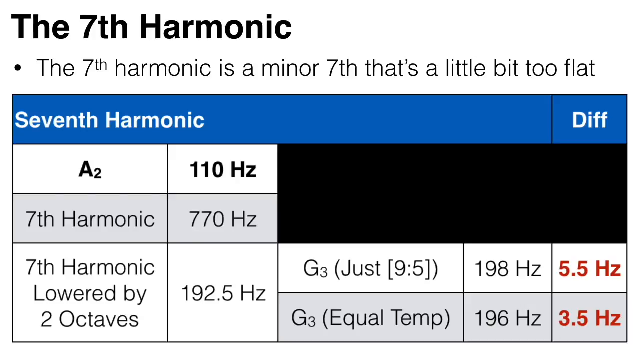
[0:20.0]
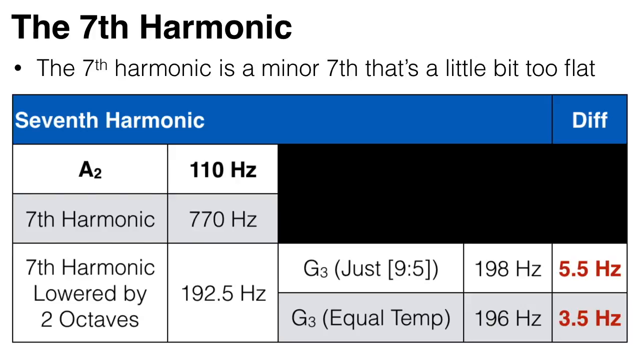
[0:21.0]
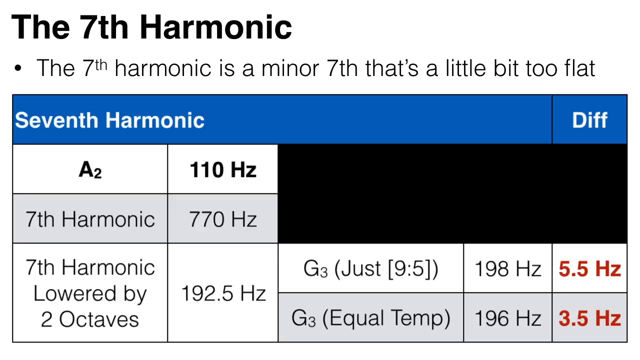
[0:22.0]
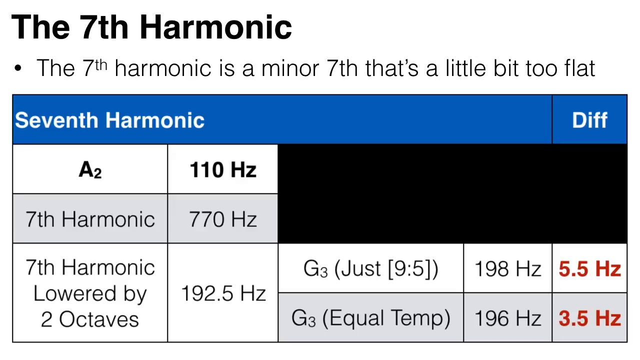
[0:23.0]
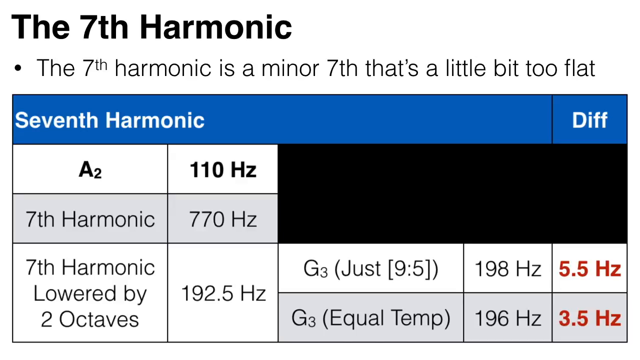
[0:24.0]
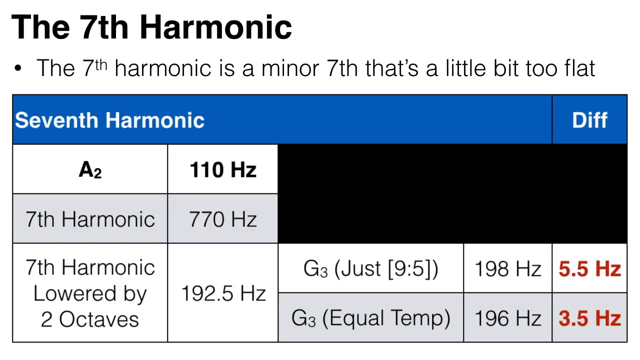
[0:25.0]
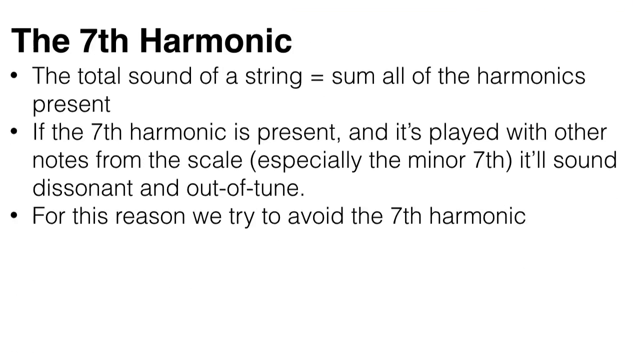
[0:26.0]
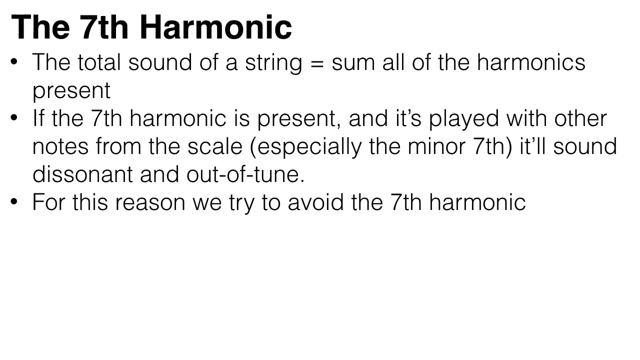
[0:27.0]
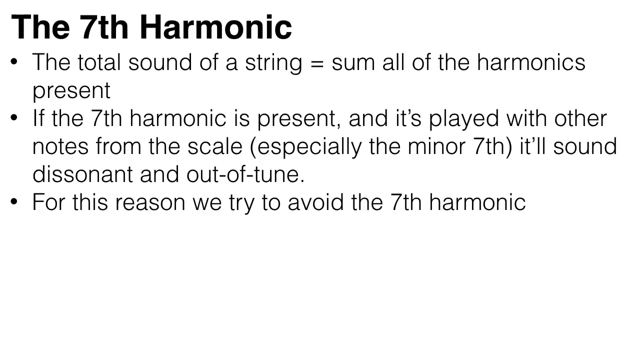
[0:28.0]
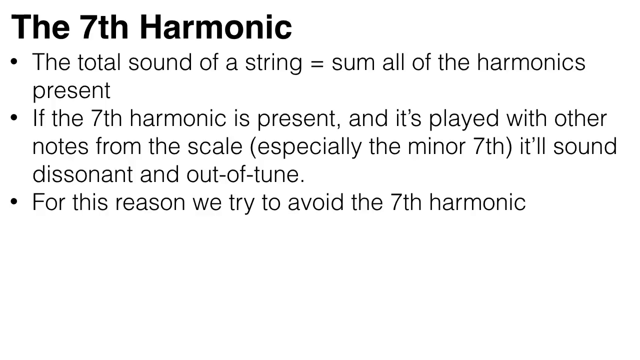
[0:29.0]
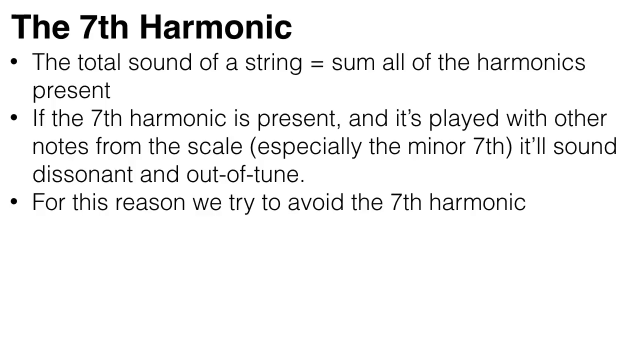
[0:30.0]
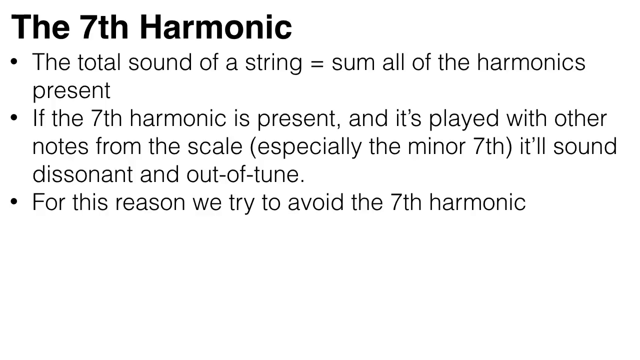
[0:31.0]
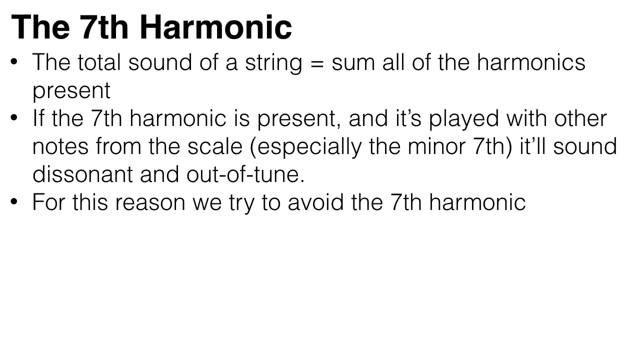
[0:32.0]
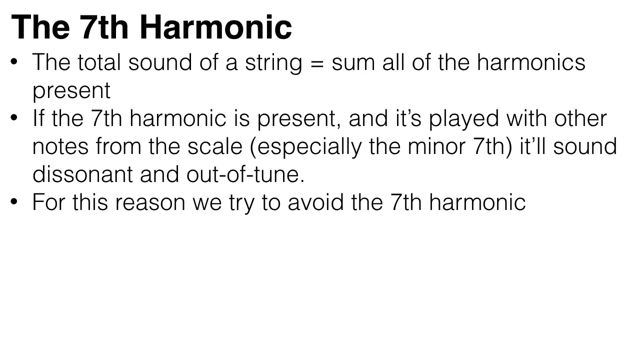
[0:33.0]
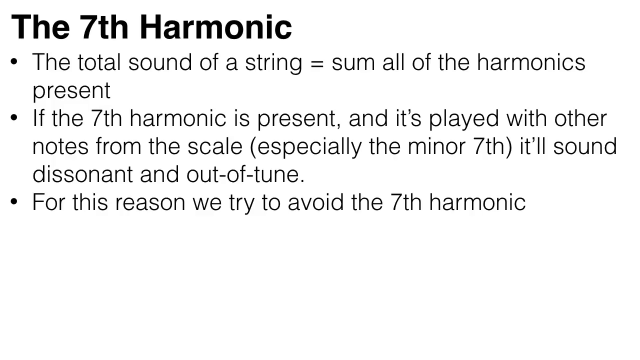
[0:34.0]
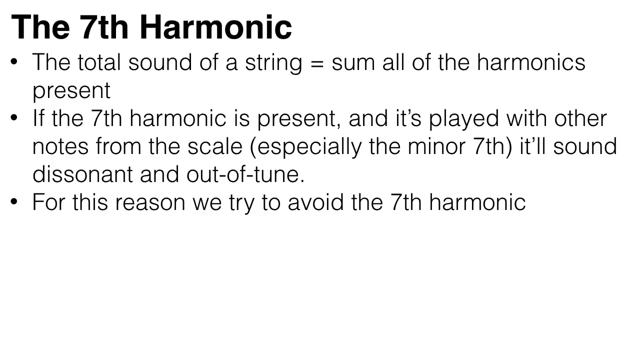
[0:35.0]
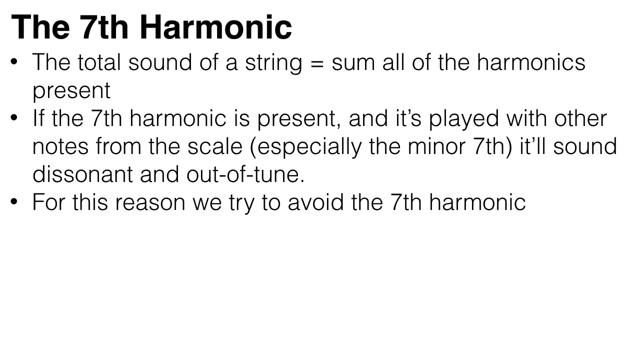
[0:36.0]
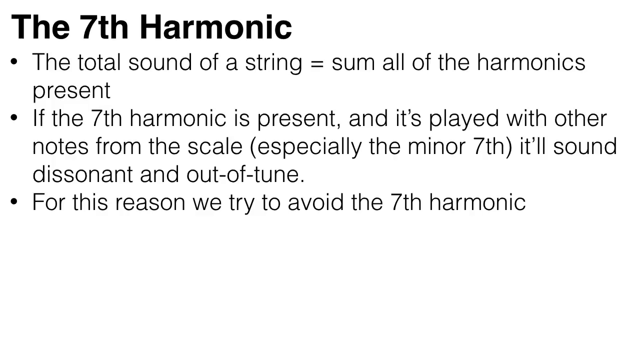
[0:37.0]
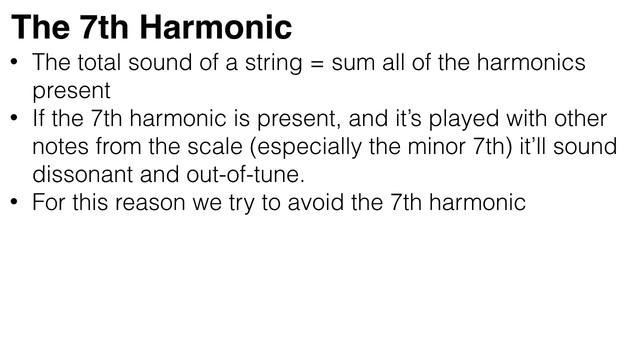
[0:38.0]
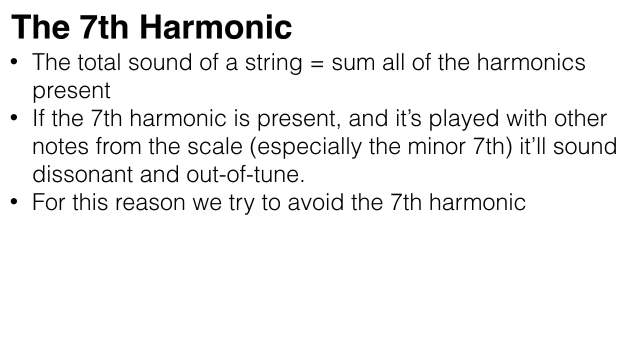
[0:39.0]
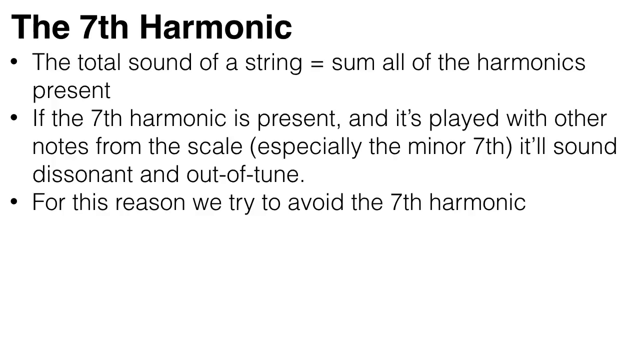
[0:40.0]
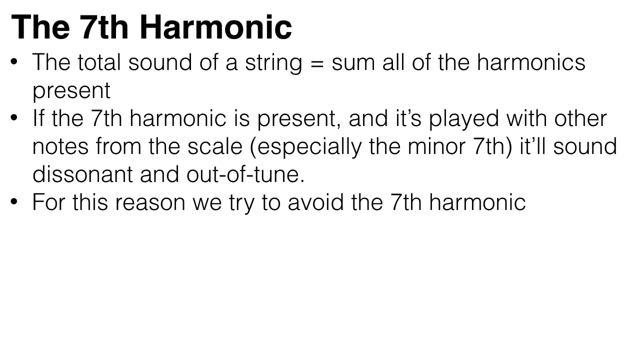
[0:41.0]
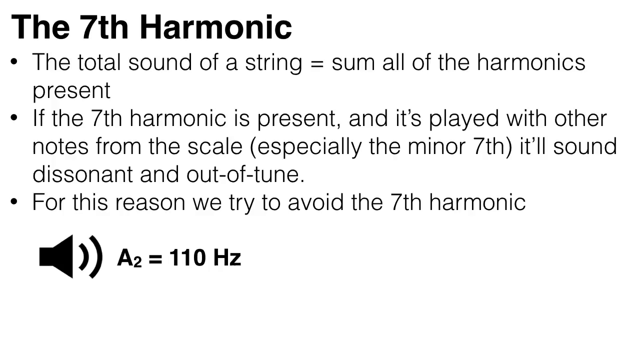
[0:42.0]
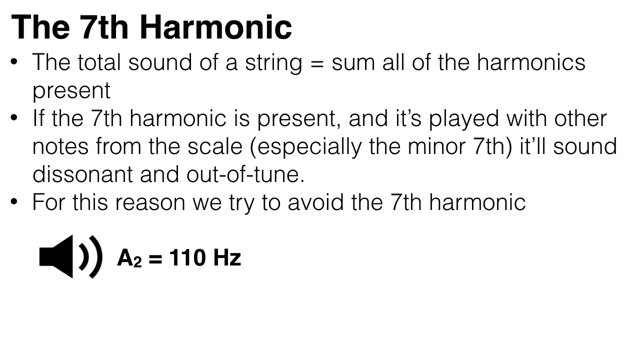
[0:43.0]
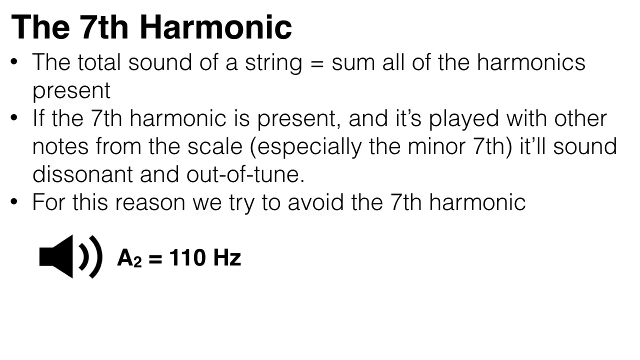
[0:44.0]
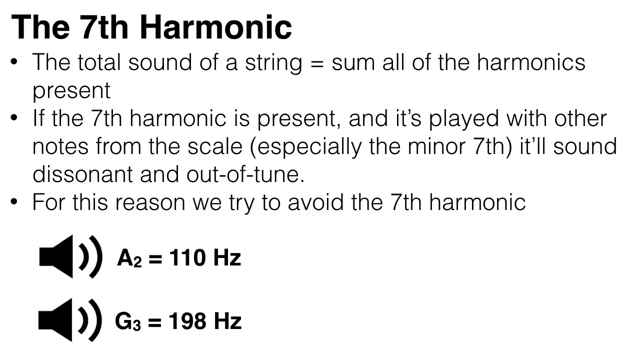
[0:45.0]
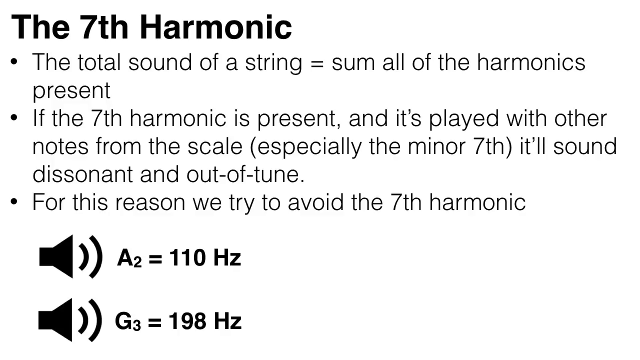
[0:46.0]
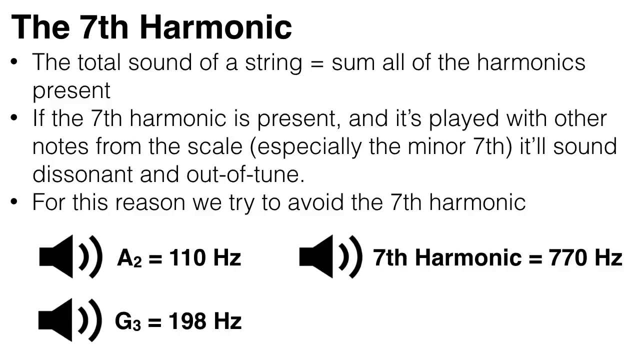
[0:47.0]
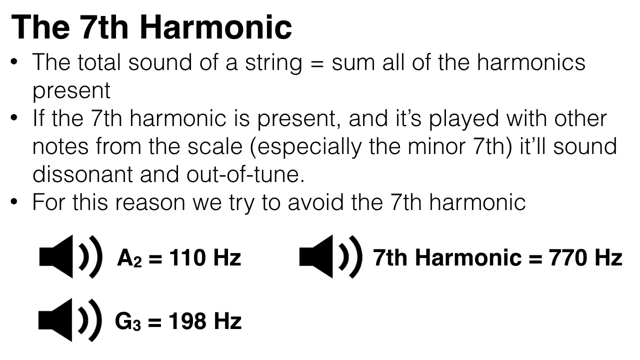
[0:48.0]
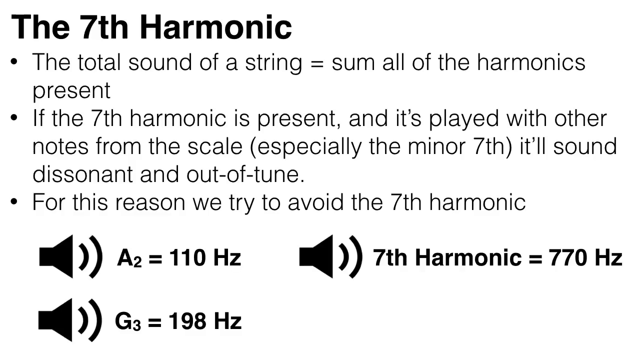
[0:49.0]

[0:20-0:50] The screen shows "the 7th harmonic" with a bullet below it reading "the 7th harmonic is a minor 7th, that's a little bit too flat." Below is a chart with a blue top column reading 7th harmonic, with difference on the right. It lists A2 at 110 hertz, the 7th harmonic at 770 hertz, and the 7th harmonic lowered by two octaves at 192.5 hertz. Further over are two more subdivisions: G3 just 9-5 ratio is 198 hertz with a difference of 5.5 hertz, and G3 at equal temp is 196 hertz with a 3.5 hertz difference. A second and third bullet then drop down: "the total sound of a string equals the sum of all the harmonics present," "if the 7th harmonic is present and it's played with other notes from the scale, especially the minor 7th, that'll sound dissonant and out of tune," and "for this reason, we try to avoid the 7th harmonic." Everything is against a white background. A sound symbol then appears with "A2 = 110 hertz," followed by "7th harmonic = 770 hertz" and "G3 = 198 hertz."